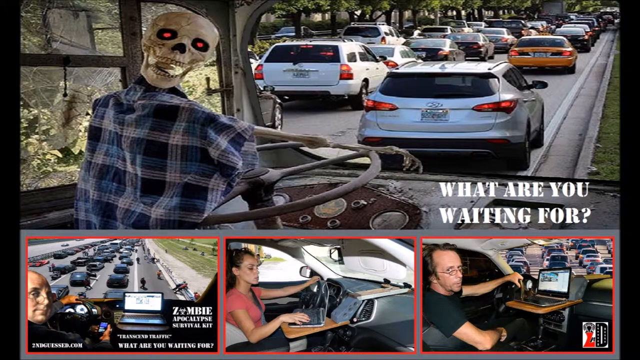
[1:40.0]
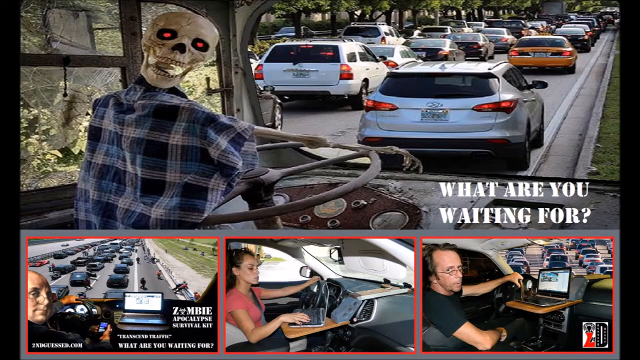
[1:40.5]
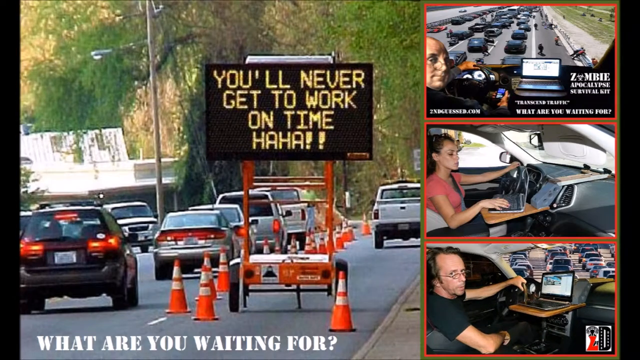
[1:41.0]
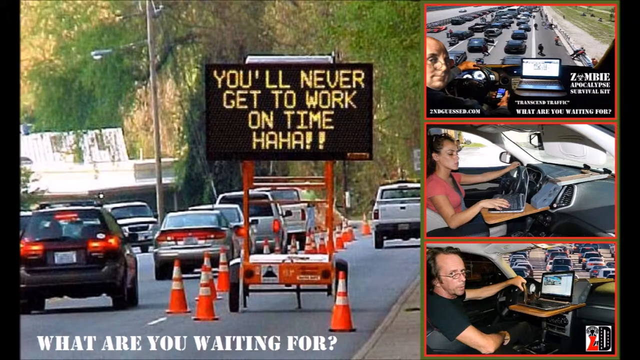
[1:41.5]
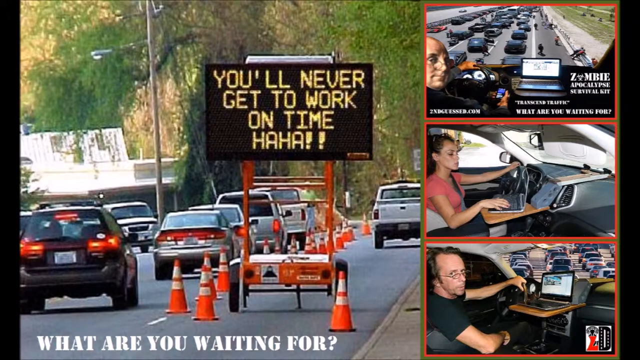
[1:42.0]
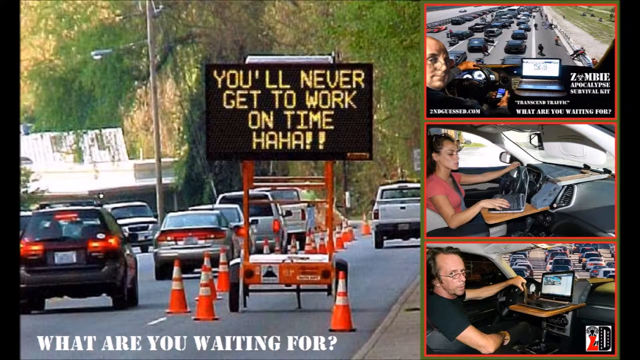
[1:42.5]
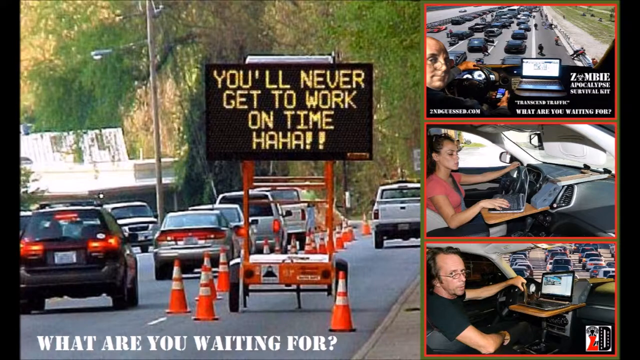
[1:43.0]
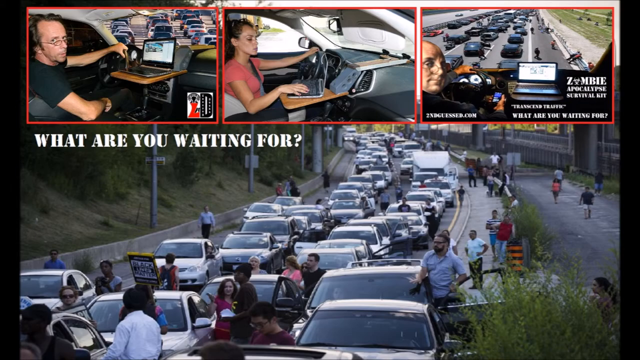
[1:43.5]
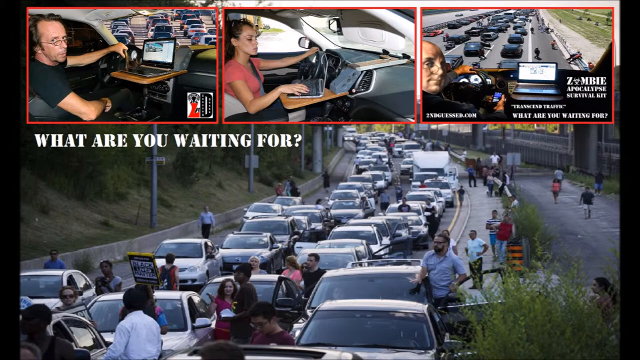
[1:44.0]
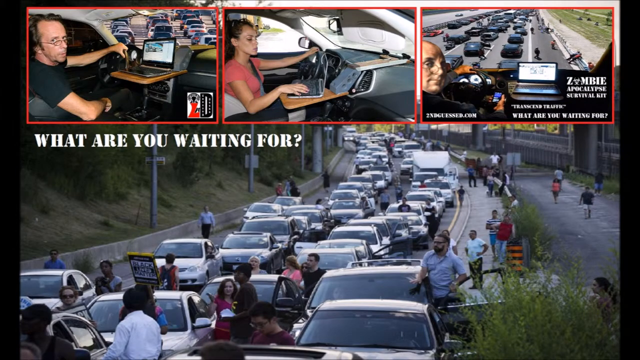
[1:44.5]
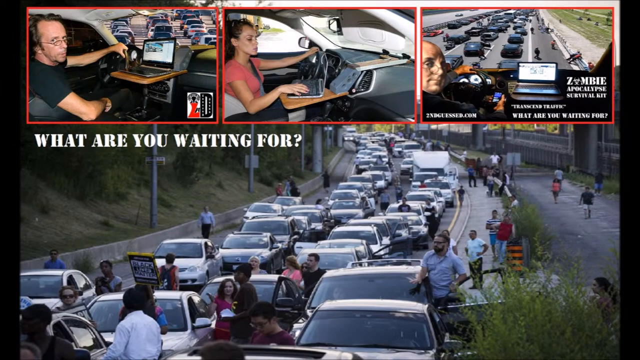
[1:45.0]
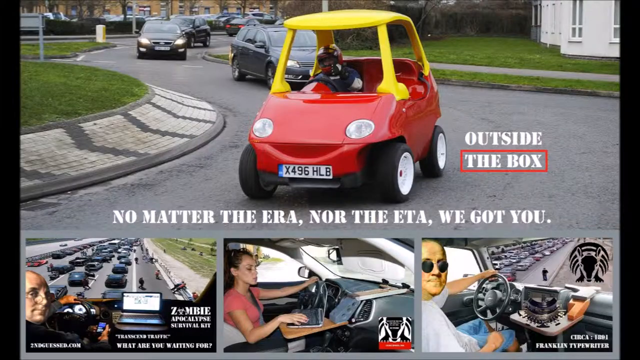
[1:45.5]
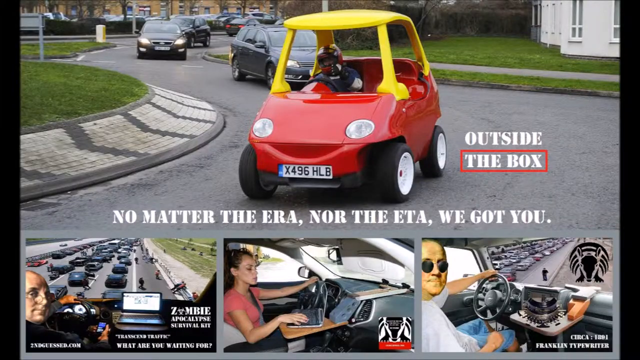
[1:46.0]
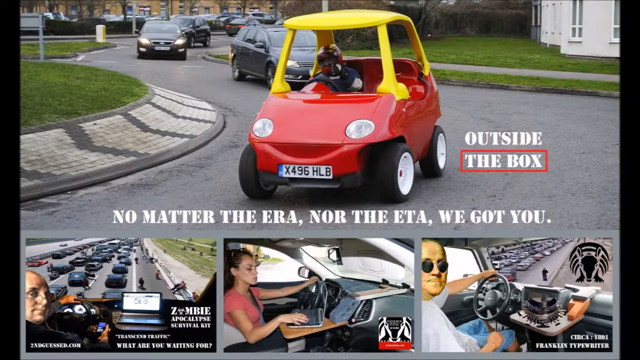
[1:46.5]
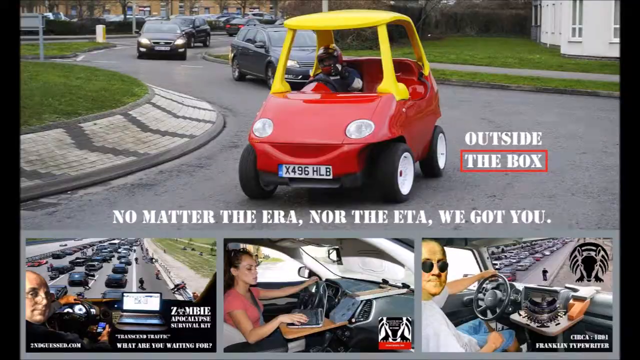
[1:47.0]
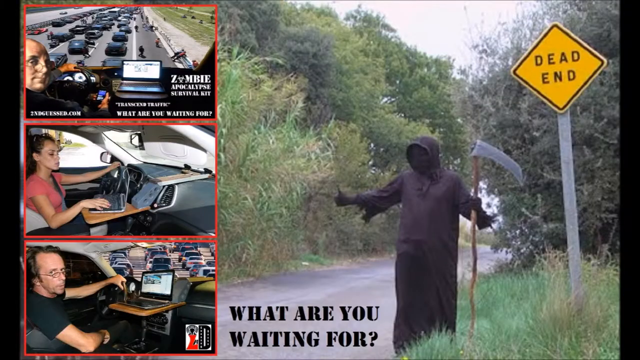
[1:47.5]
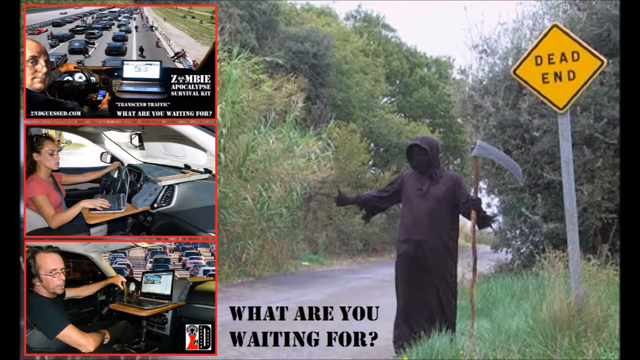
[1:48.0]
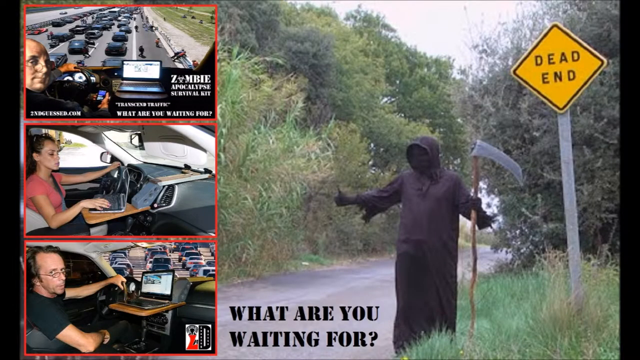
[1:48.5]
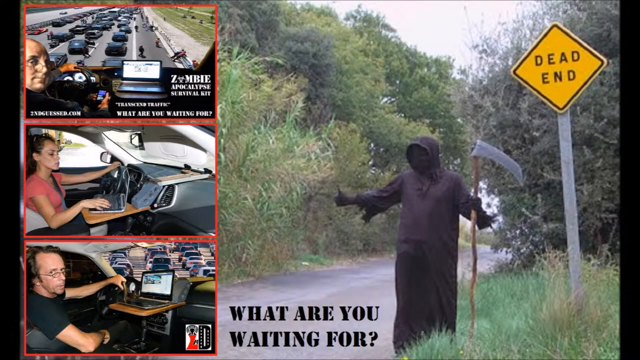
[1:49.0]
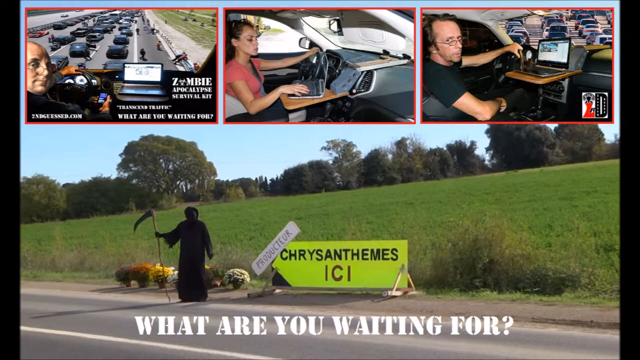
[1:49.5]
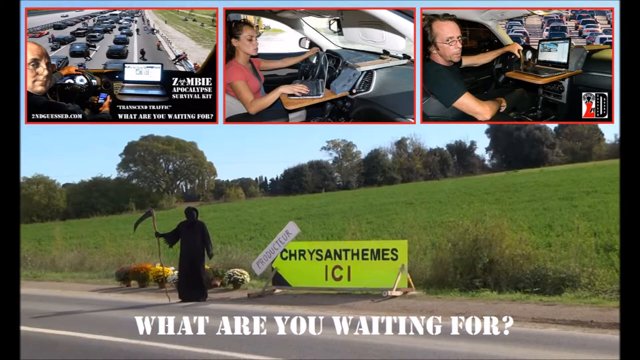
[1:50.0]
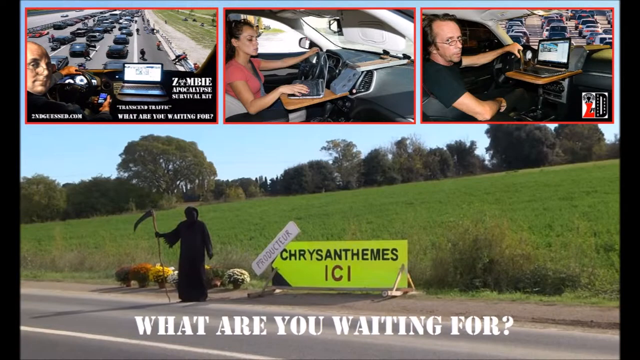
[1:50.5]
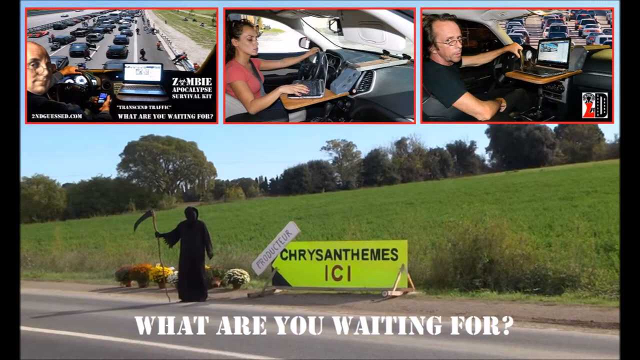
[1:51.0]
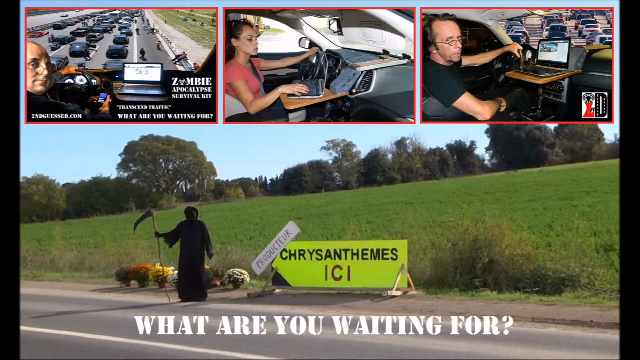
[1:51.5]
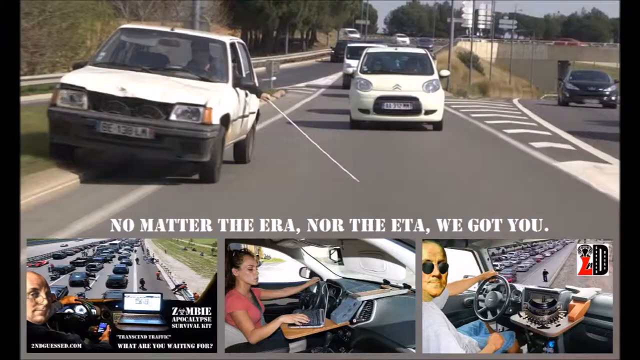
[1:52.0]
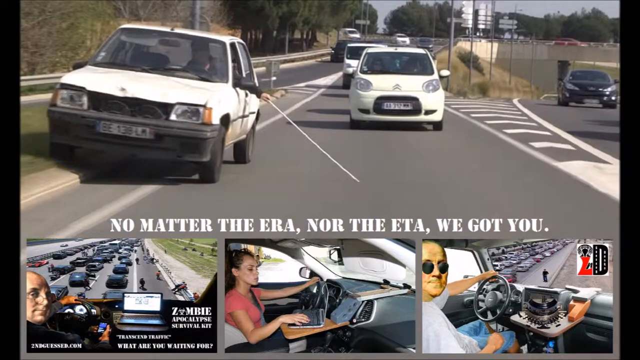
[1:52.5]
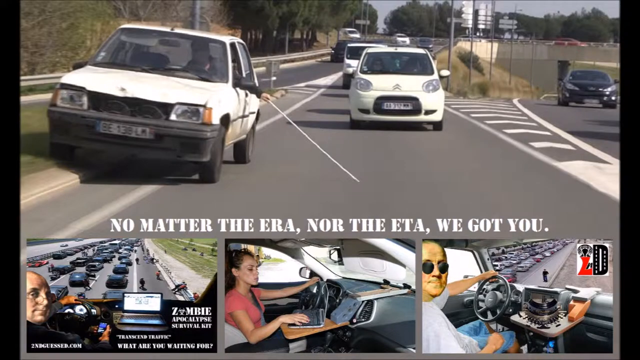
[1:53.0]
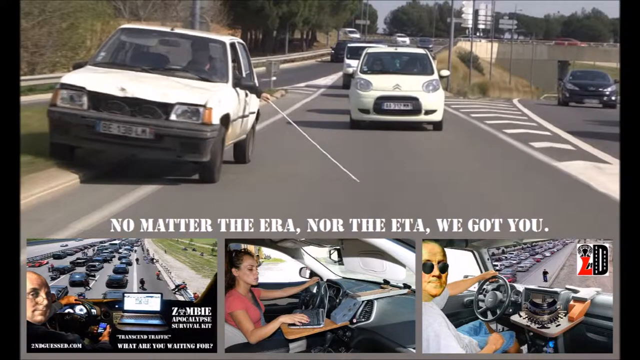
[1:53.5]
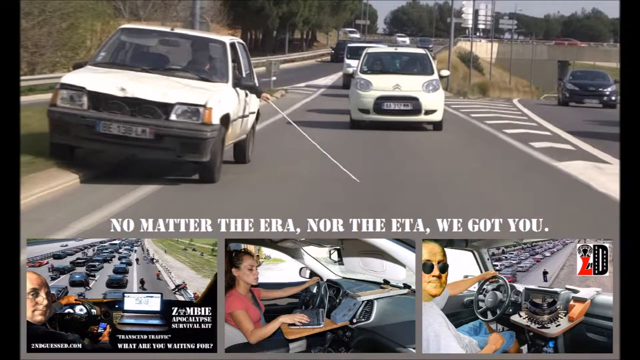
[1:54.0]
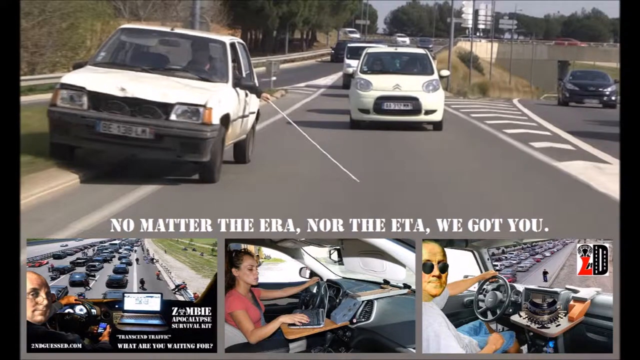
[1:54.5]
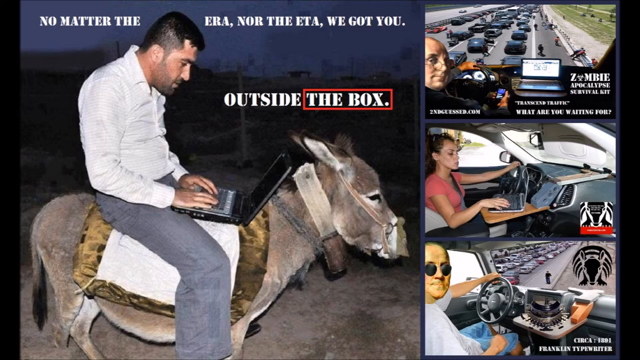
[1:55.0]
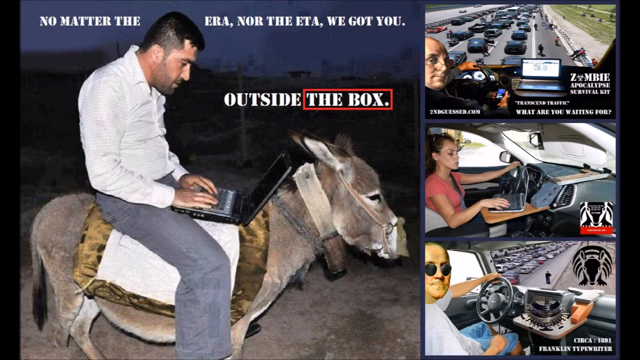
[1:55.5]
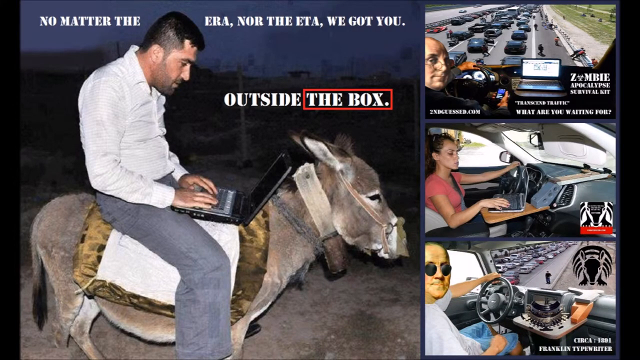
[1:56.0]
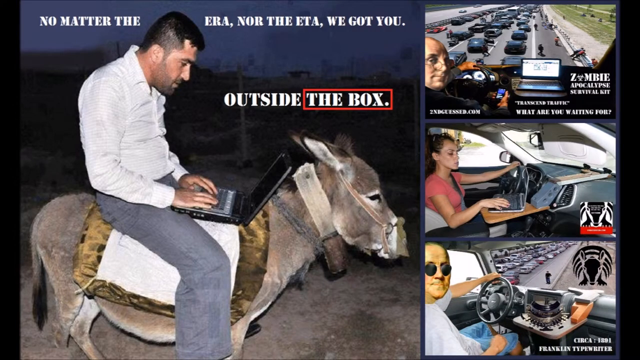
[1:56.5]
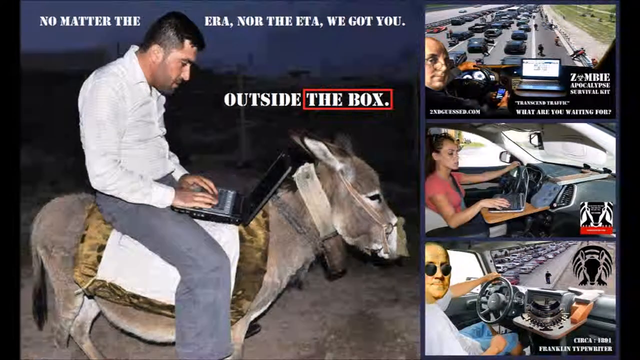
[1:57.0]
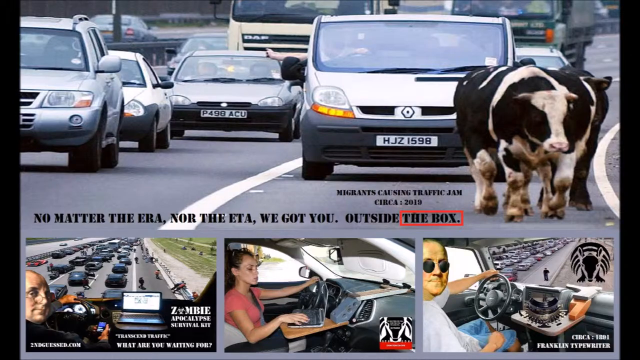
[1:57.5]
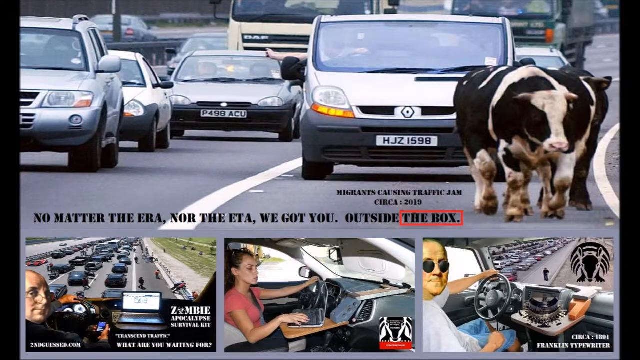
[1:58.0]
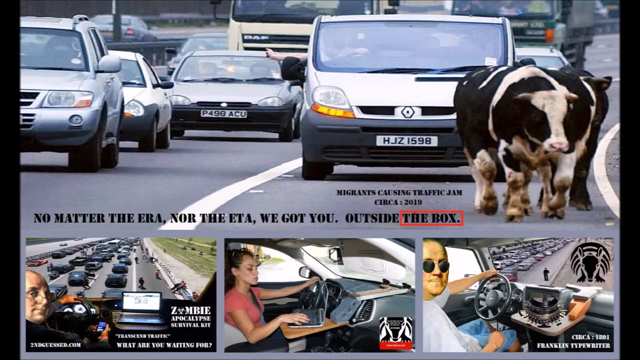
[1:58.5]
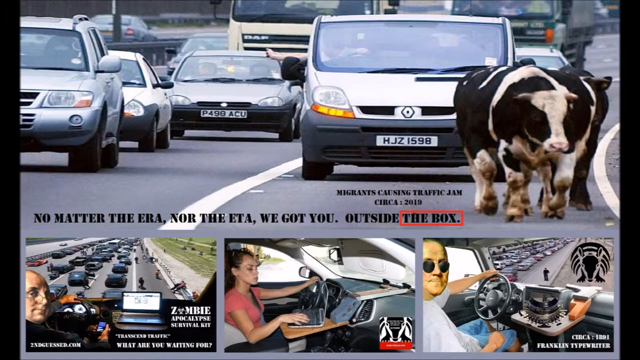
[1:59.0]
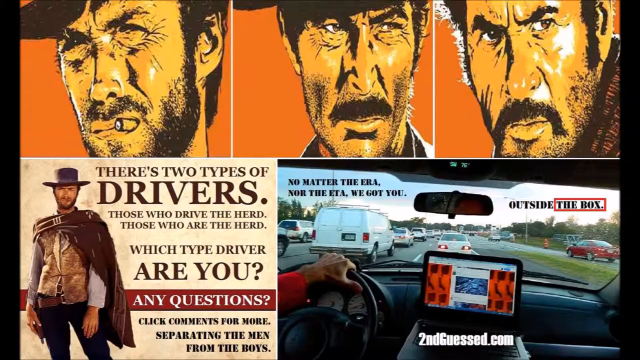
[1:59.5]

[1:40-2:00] A temporary electronic road sign displays the text "you'll never get to work on time, ha ha". In an enormous traffic jam, people have got out of their cars because they are going nowhere, and they are getting frustrated. A car made to look like one of the small Fisher-Price toy cars that children of about four or five get into has a British number plate and is driving around. The traditional image of Death, the Grim Reaper, in a black cloak and carrying a scythe, stands in front of a sign saying "dead end" with the inscription "what are you?". Death then walks down the road. A car is pulled over on the hard shoulder of a road. A man rides a donkey while using a laptop; he is too big to be riding it, and the donkey appears to be carrying too much weight. Cattle are loose on a road. Finally, images from The Good, the Bad and the Ugly appear, showing Clint Eastwood, Eli Wallach and Lee Van Cleef.